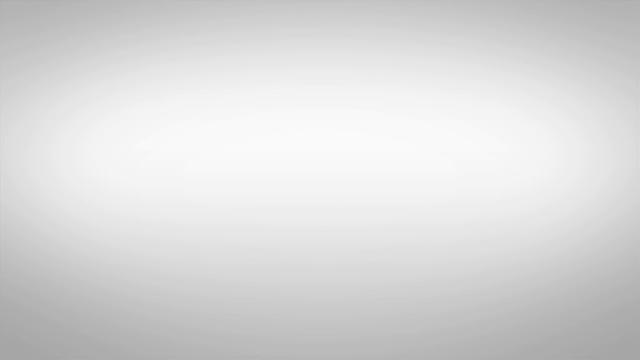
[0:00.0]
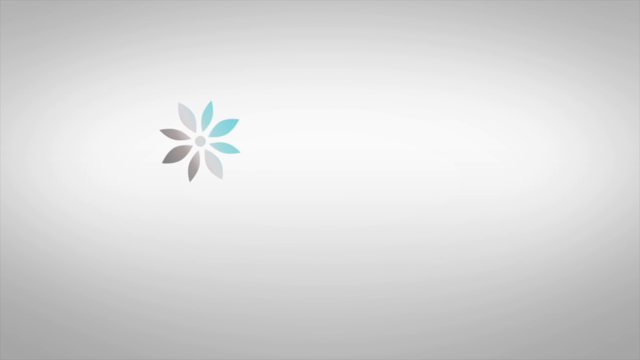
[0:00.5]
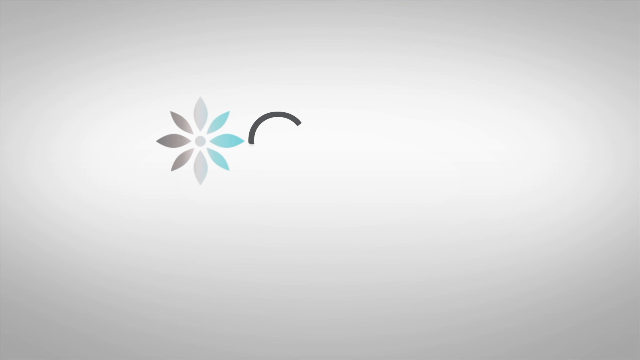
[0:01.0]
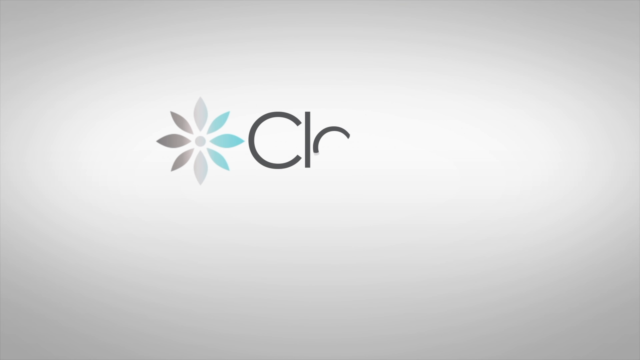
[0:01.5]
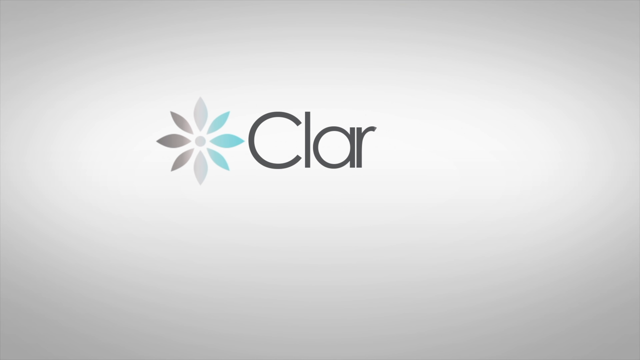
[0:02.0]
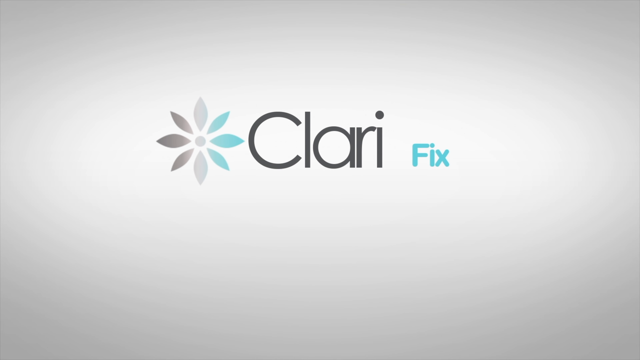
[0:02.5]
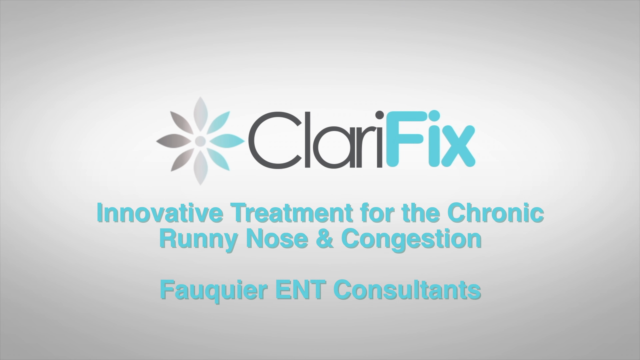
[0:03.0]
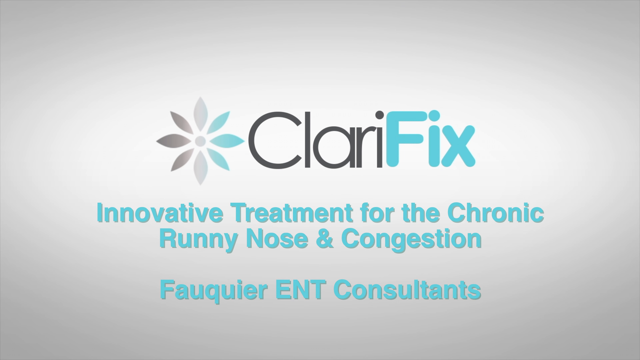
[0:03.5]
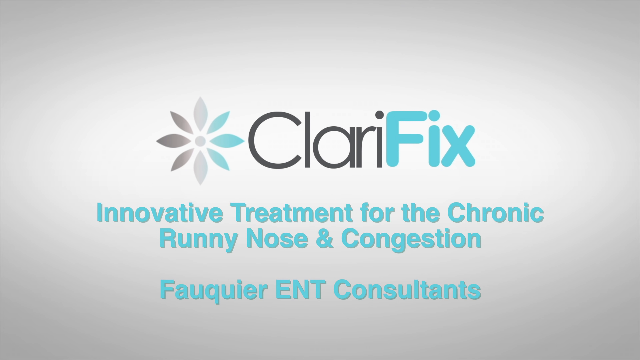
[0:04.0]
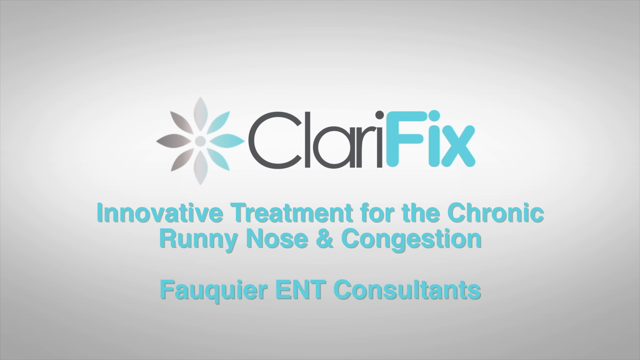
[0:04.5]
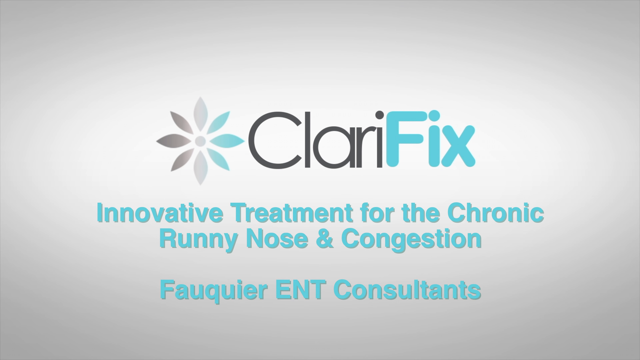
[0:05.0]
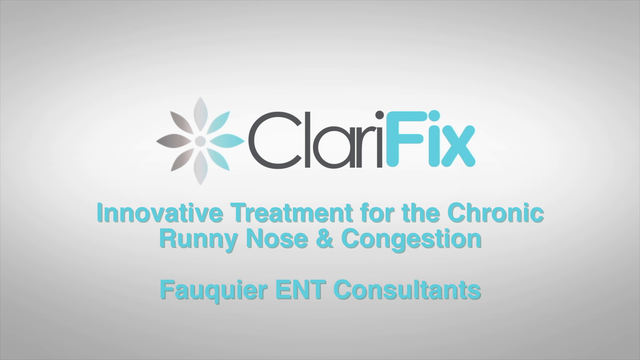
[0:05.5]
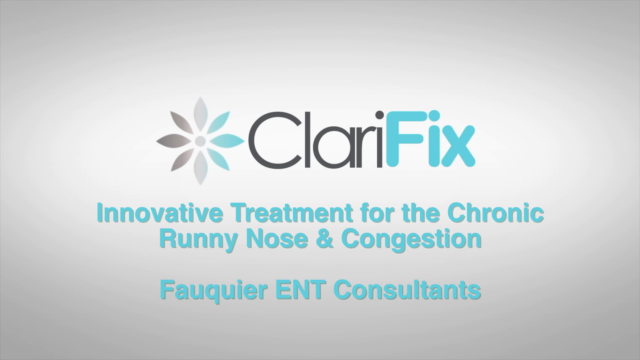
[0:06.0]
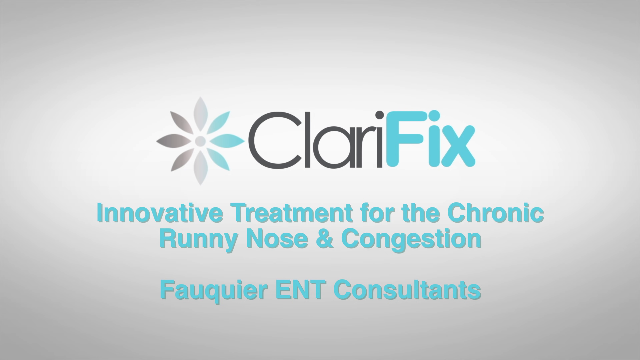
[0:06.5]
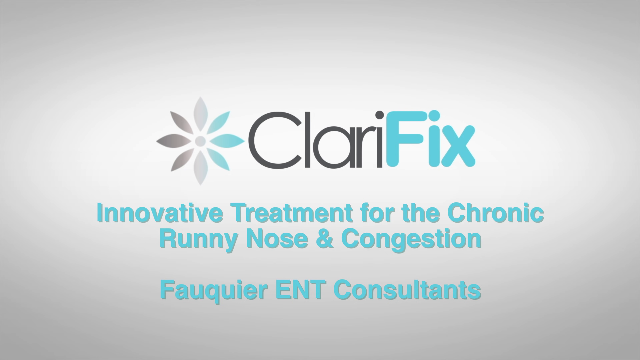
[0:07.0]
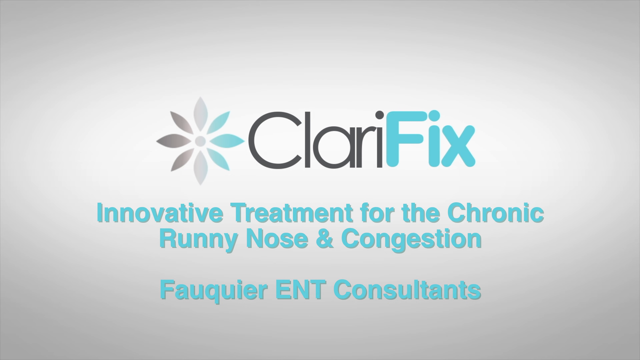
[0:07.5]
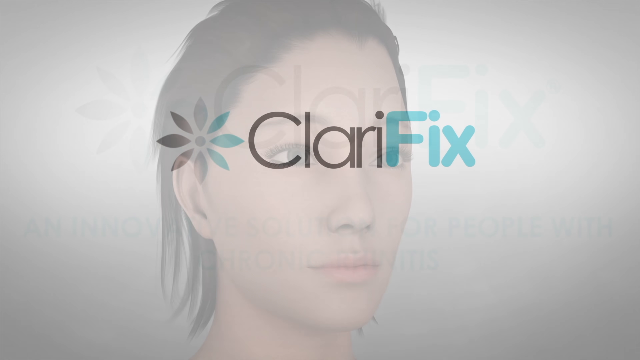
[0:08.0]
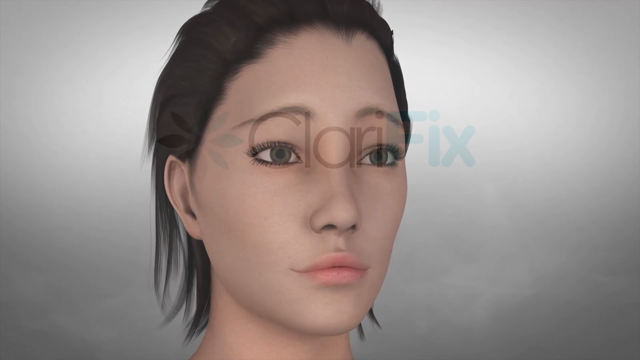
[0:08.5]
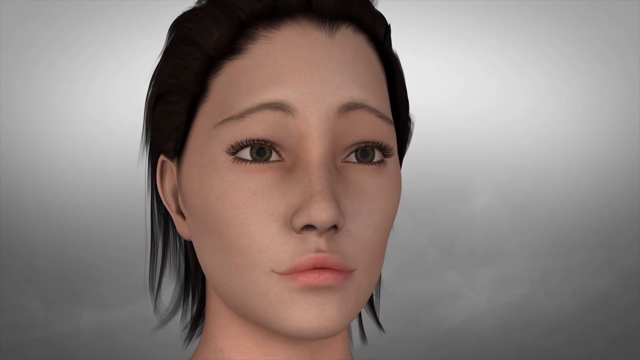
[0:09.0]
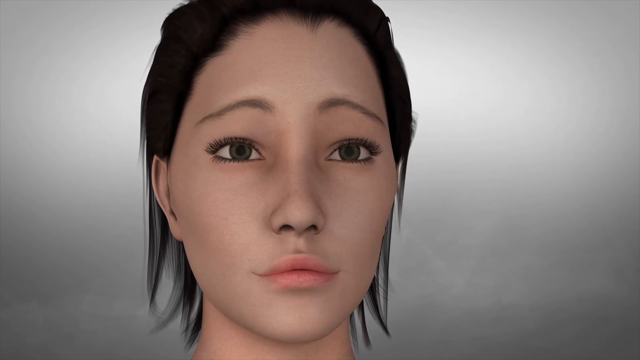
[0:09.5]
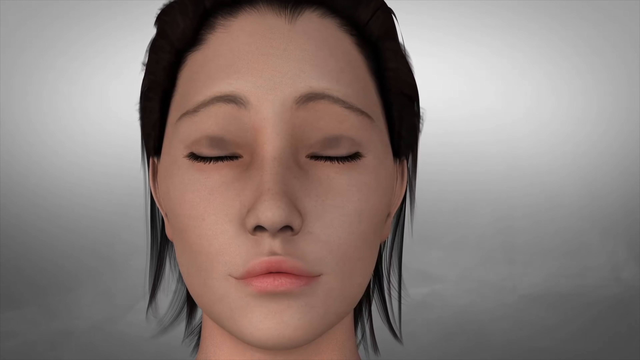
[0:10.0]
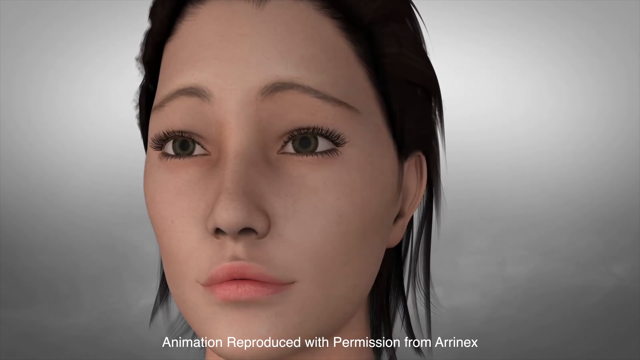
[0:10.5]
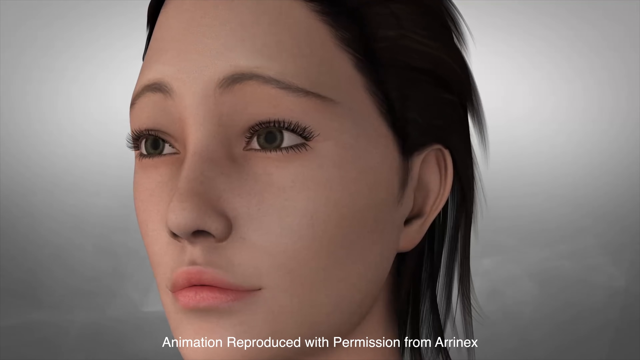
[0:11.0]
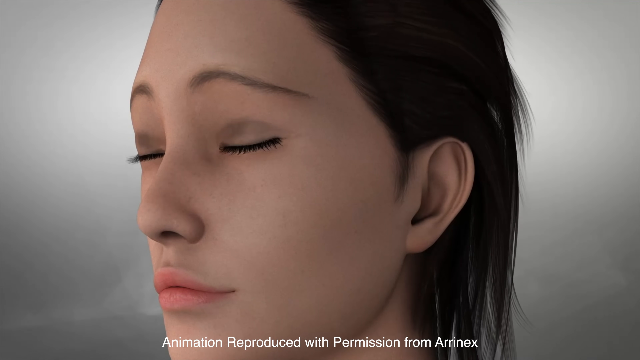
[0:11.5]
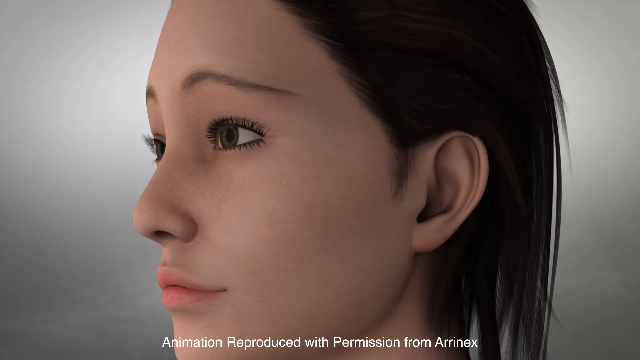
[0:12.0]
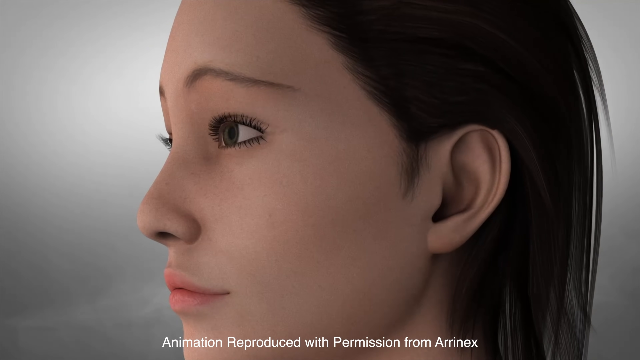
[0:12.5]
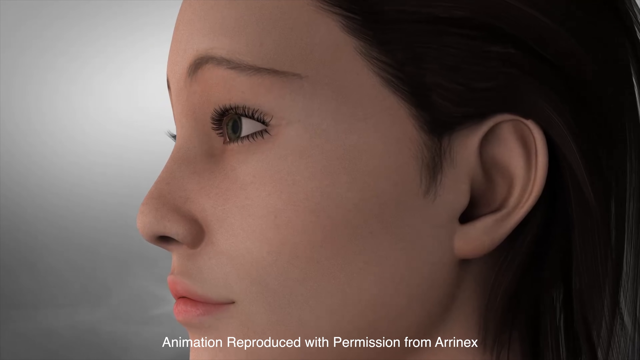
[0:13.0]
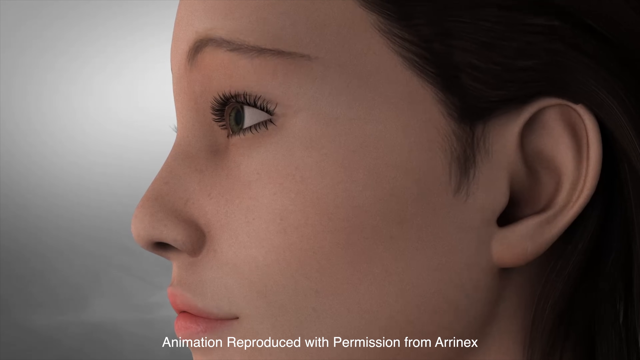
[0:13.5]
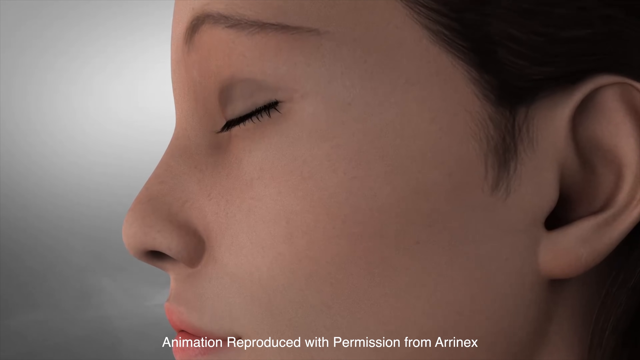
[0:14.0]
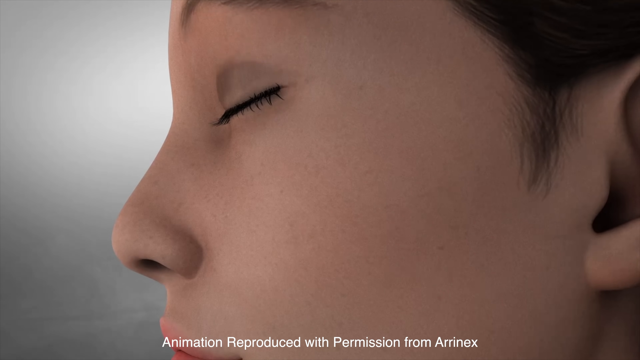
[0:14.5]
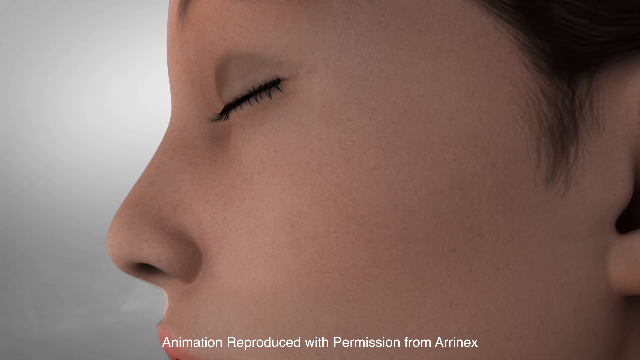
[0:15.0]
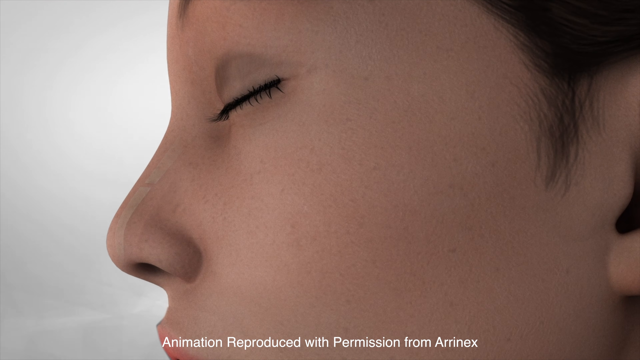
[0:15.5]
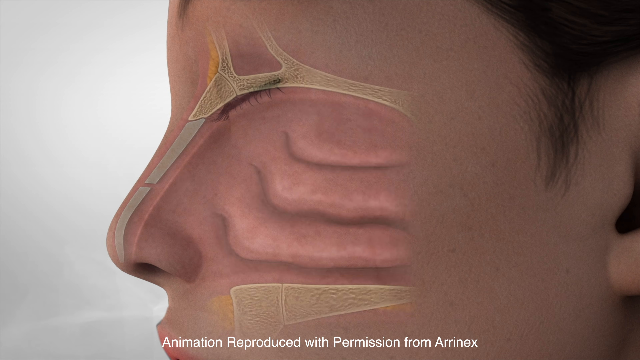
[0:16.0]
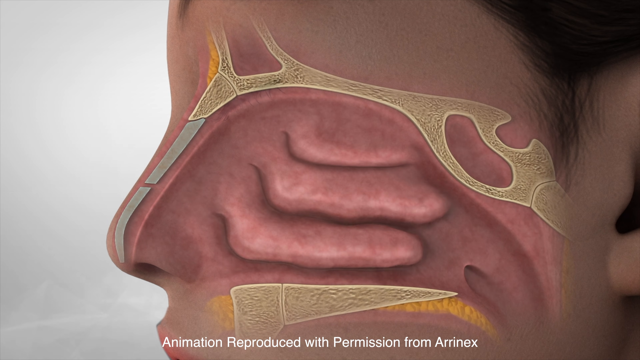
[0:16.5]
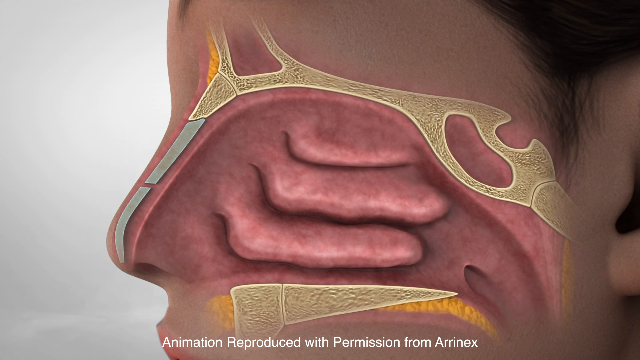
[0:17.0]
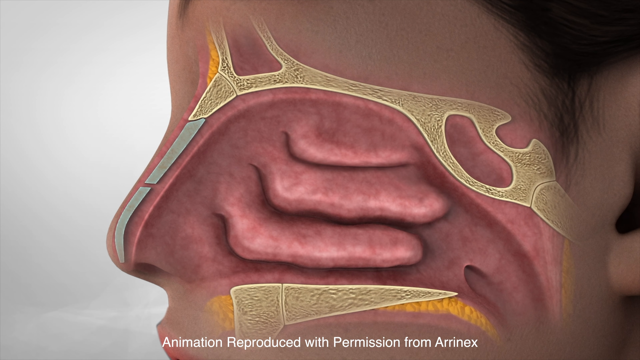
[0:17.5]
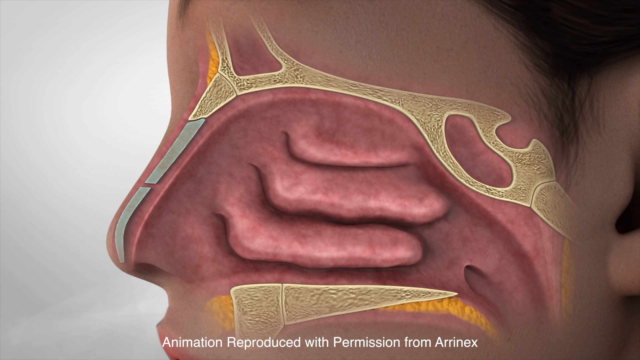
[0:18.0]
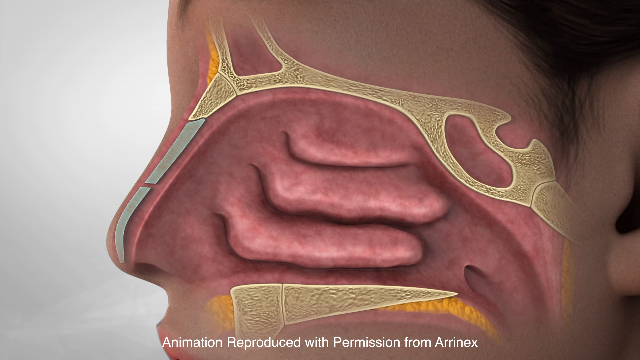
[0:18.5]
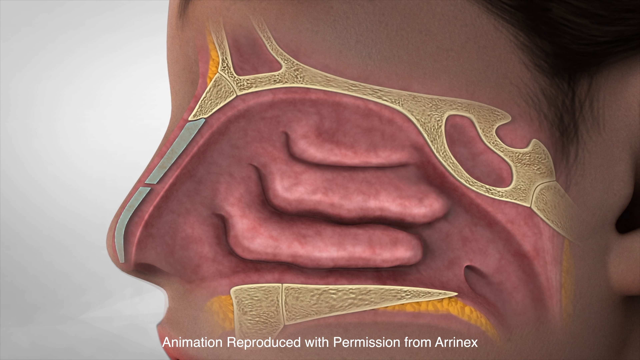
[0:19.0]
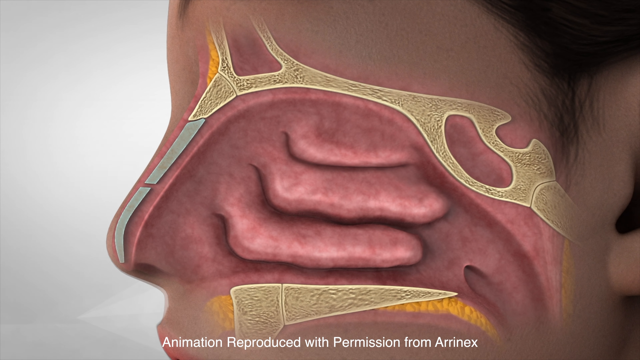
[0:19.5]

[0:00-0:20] The video seems to advertise or educate viewers about Clarifix, an innovative treatment for chronic runny nose and congestion, and mentions some ENT consultants. An animated white woman with brown hair appears; her face is shown, then a side profile view with her eyes closed. Next comes a graphic of what the inside of her sinus area looks like, in which the nasal cavity and the mouth are visible. The woman and all of the graphics are animated; no real person appears.